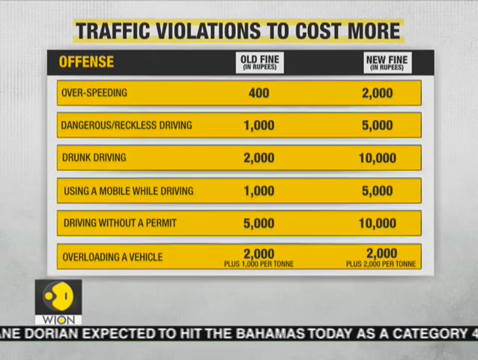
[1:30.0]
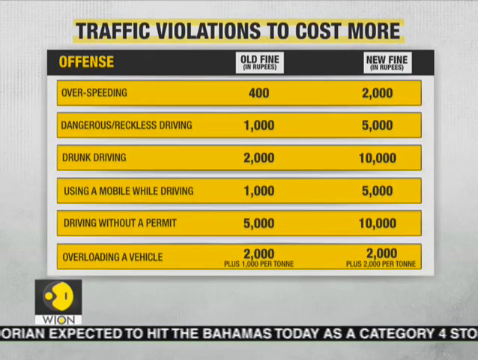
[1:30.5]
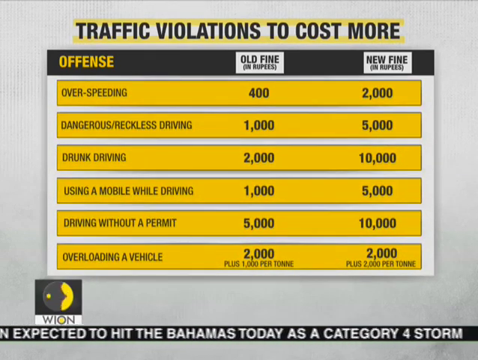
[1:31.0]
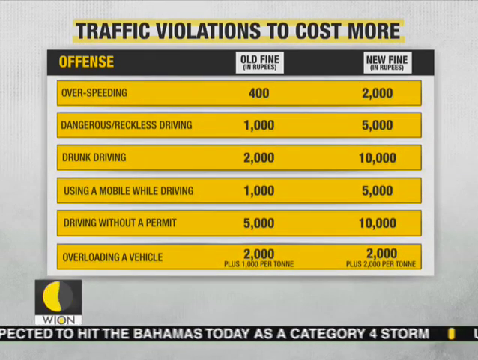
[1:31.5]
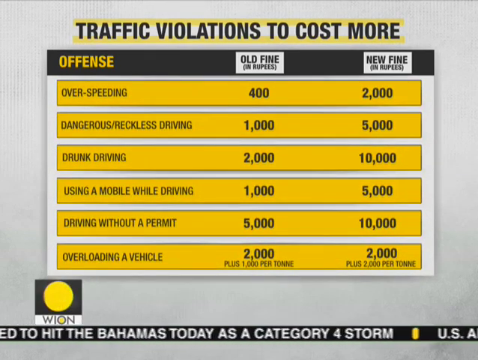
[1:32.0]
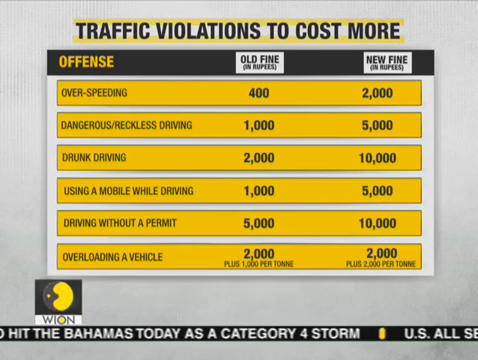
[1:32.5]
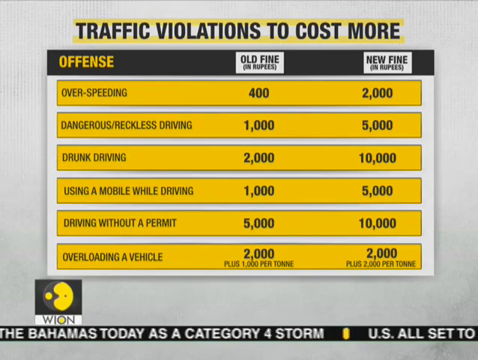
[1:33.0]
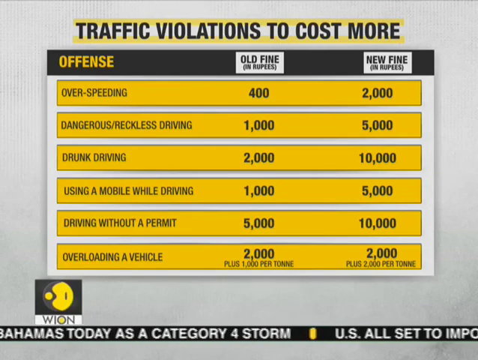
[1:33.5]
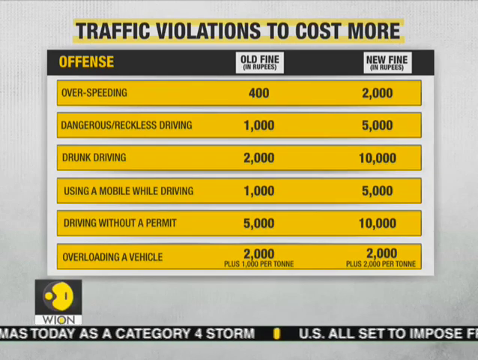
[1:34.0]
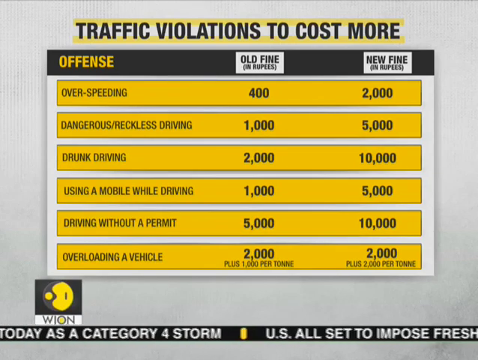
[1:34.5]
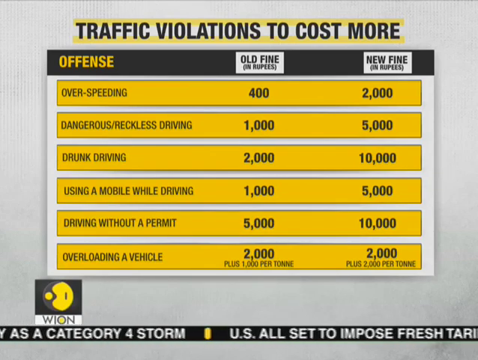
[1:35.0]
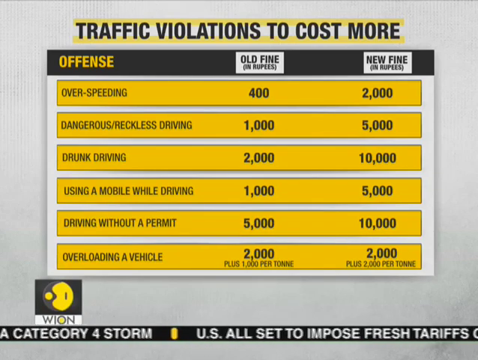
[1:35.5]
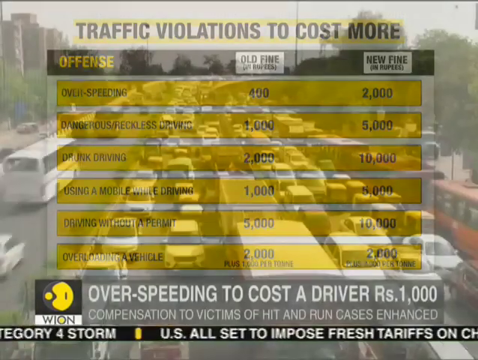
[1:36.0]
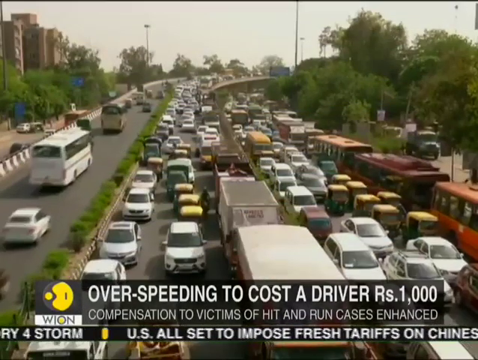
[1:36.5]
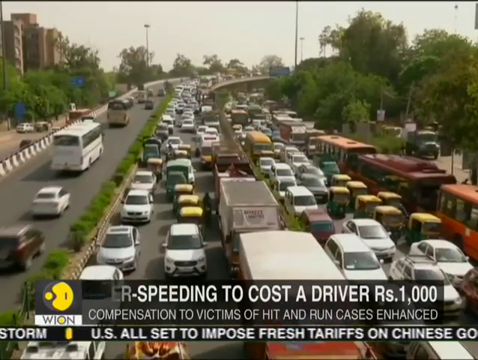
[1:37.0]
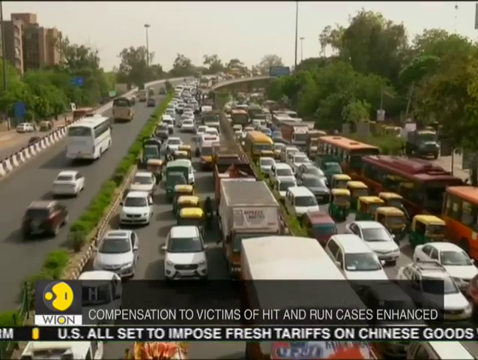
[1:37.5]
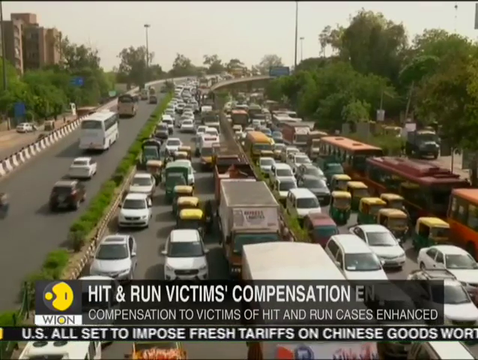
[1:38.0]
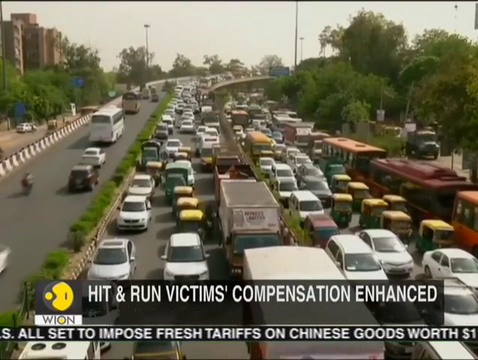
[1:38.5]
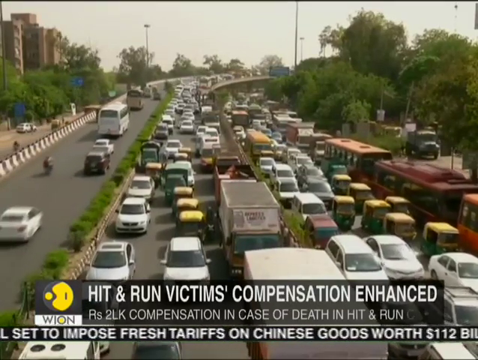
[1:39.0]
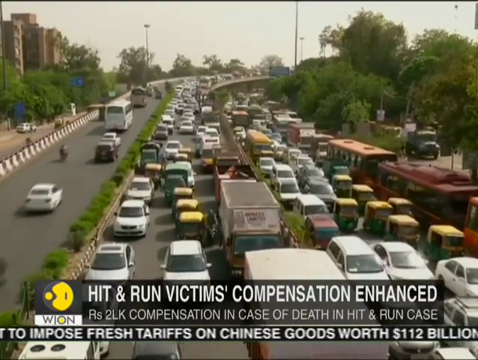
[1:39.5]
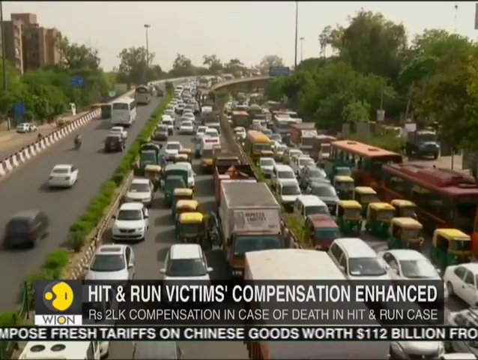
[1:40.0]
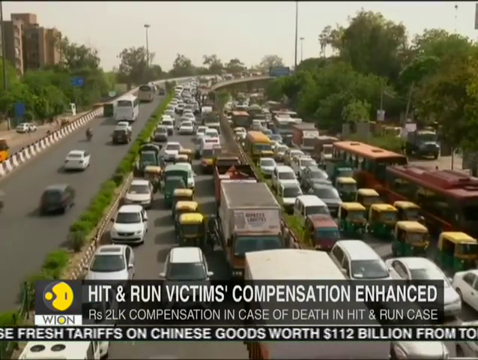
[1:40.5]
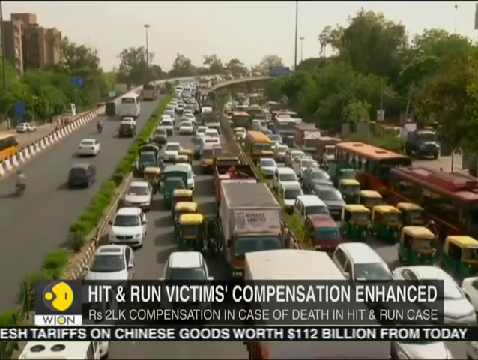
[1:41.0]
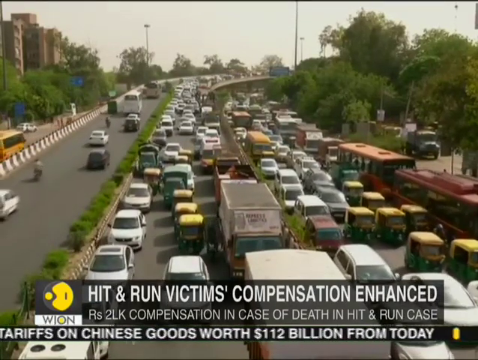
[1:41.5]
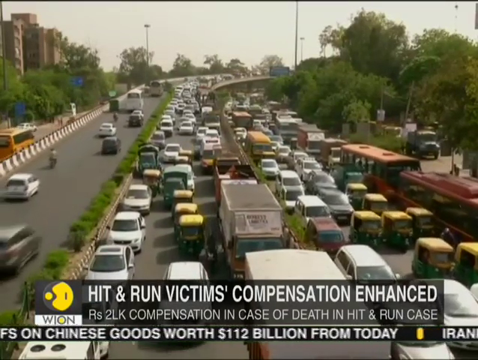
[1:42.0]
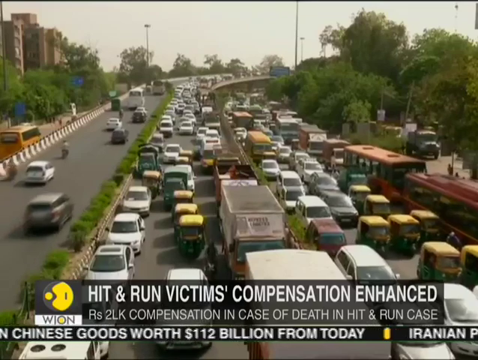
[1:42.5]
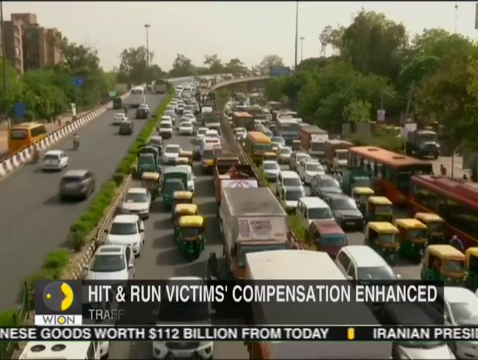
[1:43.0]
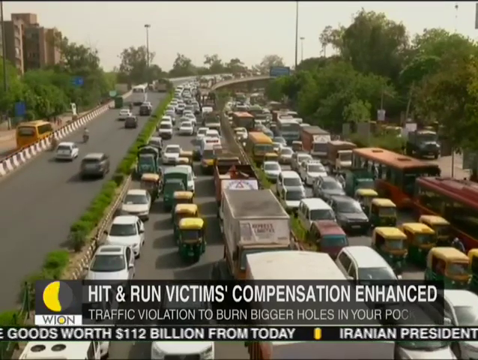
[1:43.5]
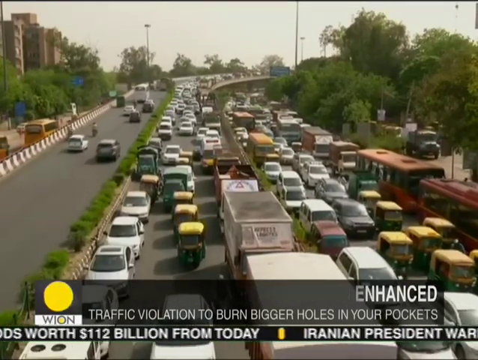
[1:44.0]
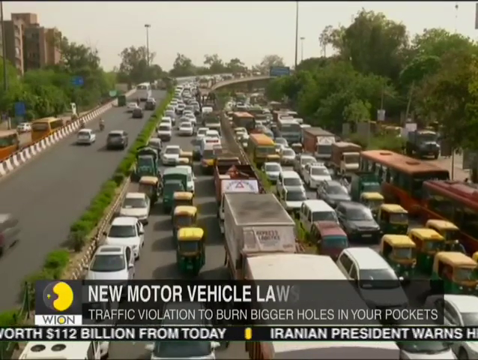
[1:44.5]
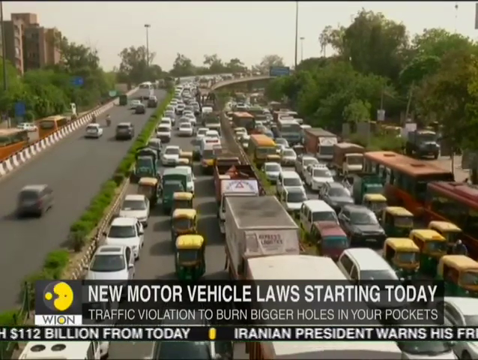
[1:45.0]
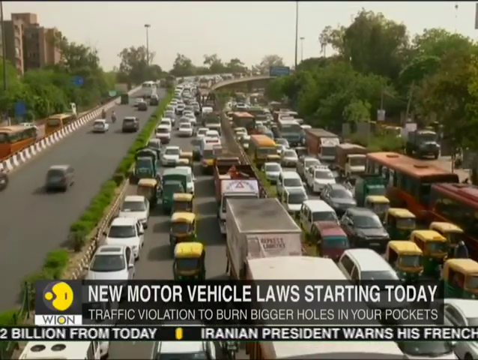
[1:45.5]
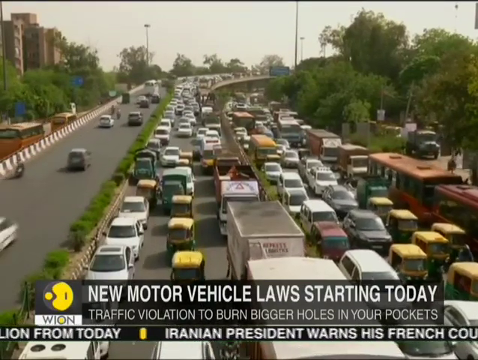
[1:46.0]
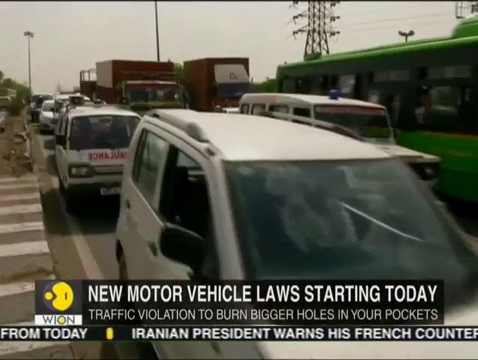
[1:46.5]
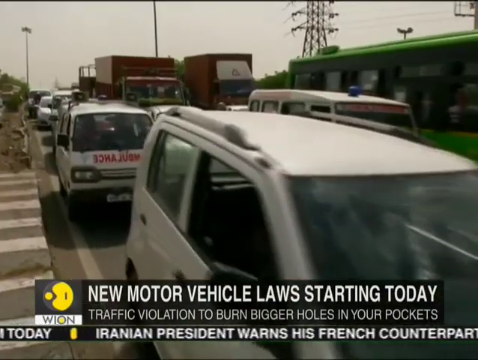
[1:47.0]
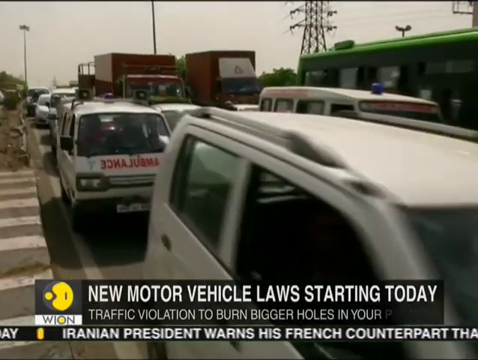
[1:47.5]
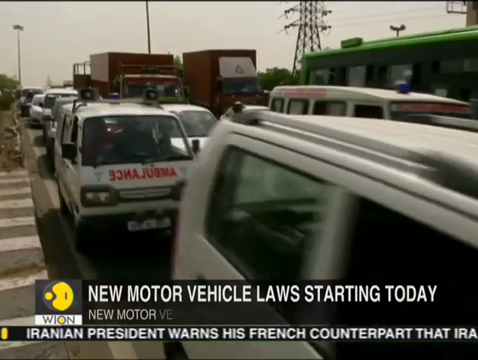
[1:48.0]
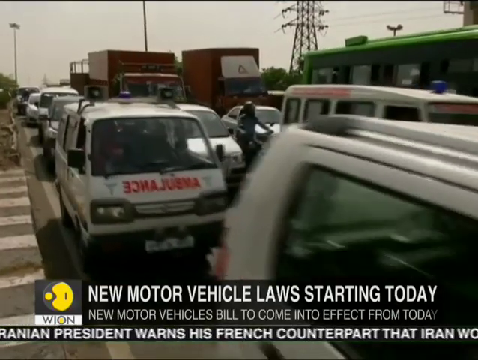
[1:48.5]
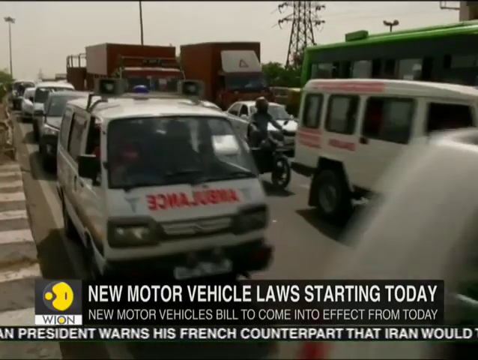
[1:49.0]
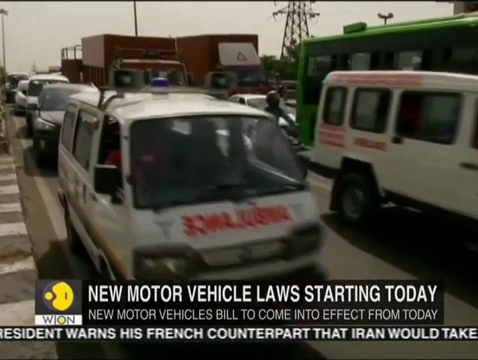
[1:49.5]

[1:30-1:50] The page reading "traffic violations to cost more" is shown, listing offenses with the old fine written next to them and the new fines. A congested street then appears, with too many cars traveling in the right-side direction: buses, lorries, three-wheelers and trucks. Green trees are on the right, poles stand in the street, and on the right side there are a few cars; two buses and two small cars travel up the road. On the left side a brown building, poles and trees are visible, and a motorbike is seen clearly because that side of the road is free and has less traffic than the other side.